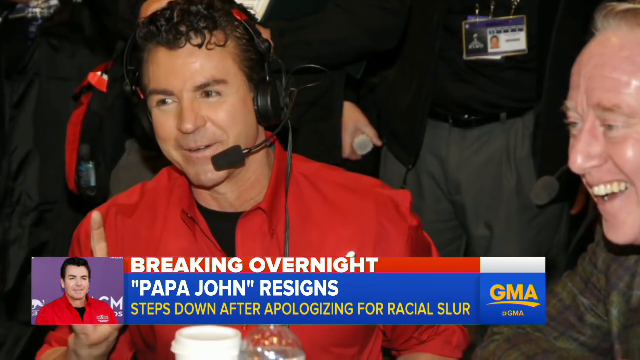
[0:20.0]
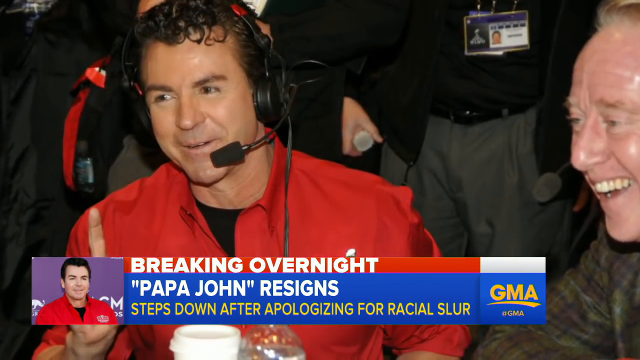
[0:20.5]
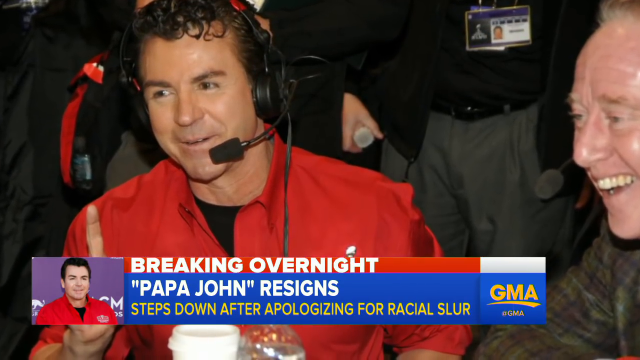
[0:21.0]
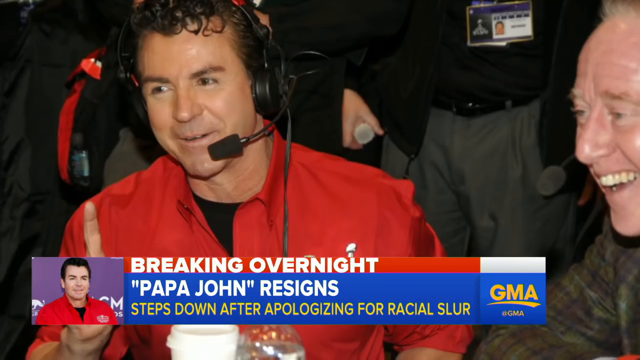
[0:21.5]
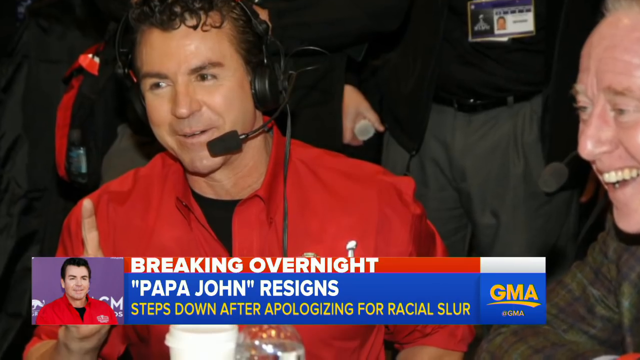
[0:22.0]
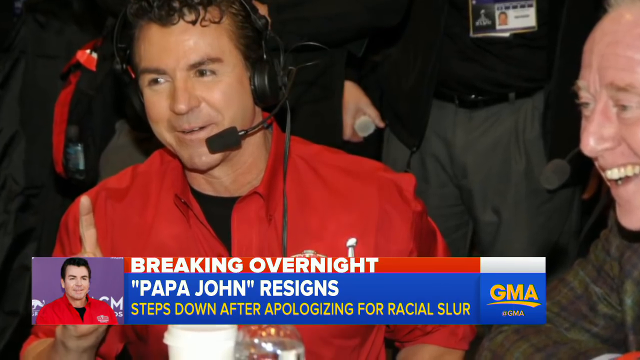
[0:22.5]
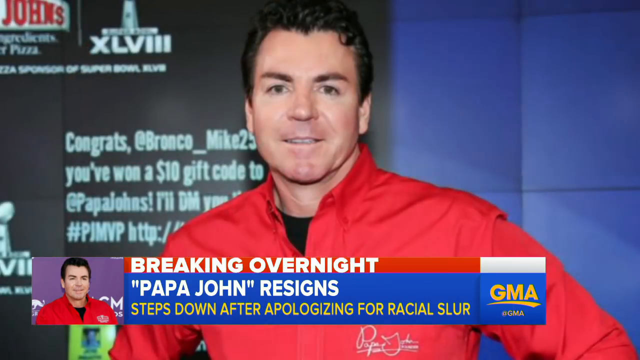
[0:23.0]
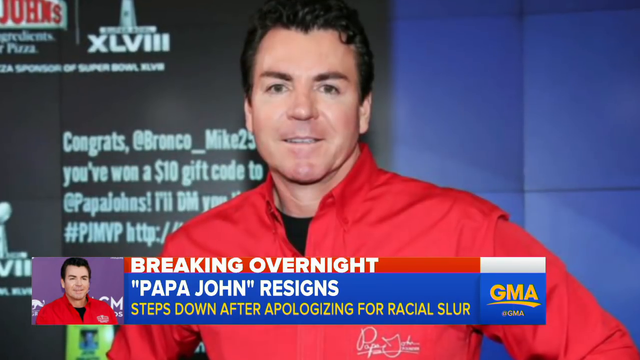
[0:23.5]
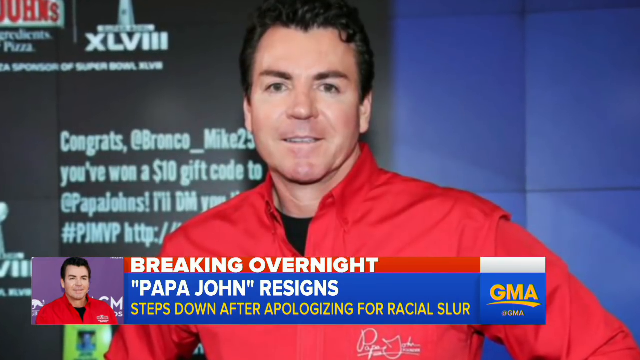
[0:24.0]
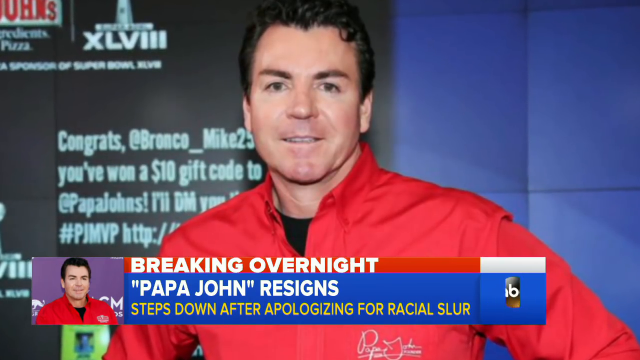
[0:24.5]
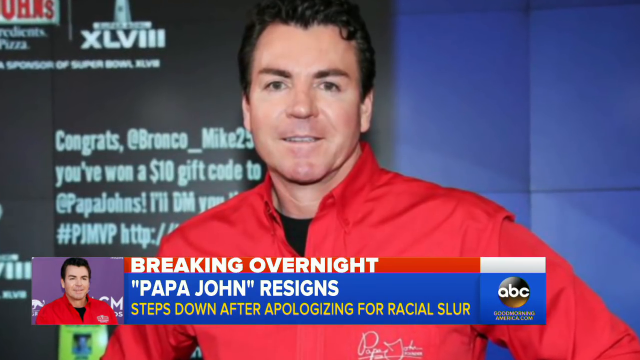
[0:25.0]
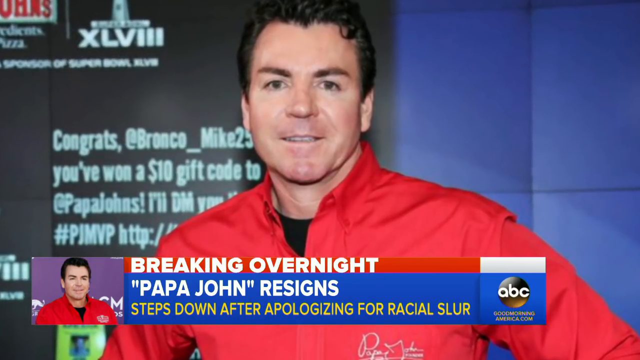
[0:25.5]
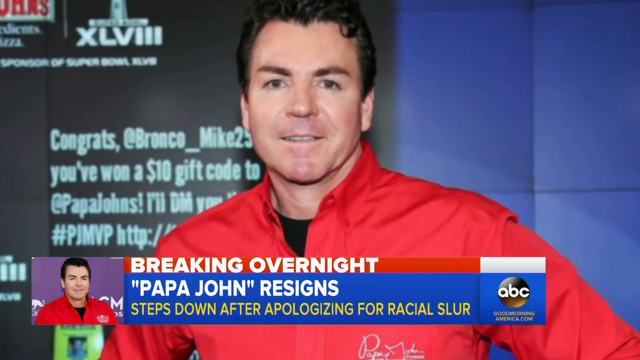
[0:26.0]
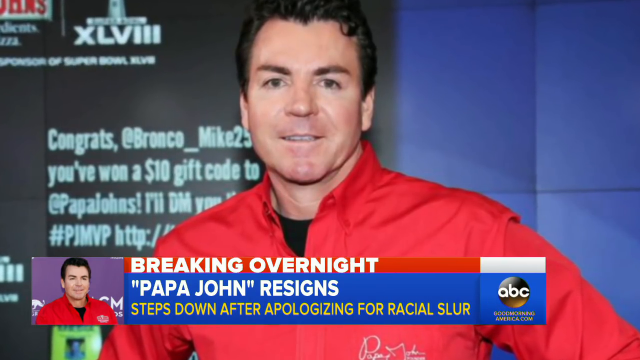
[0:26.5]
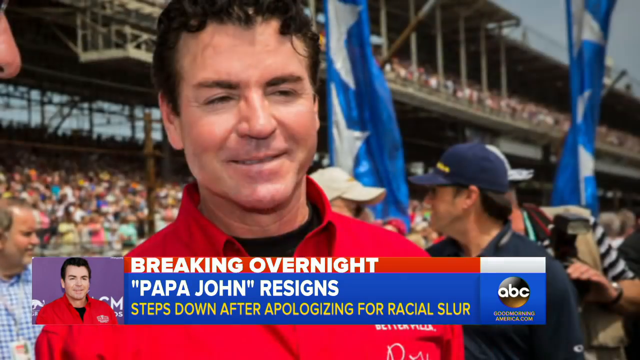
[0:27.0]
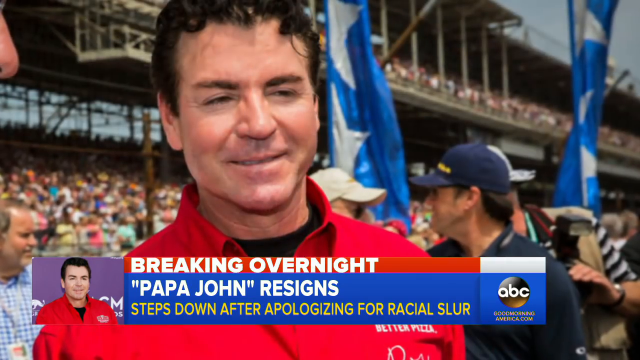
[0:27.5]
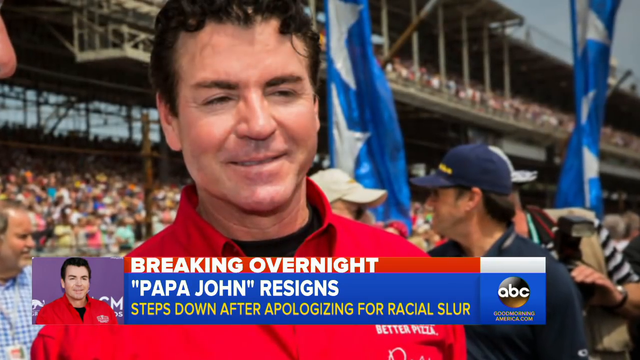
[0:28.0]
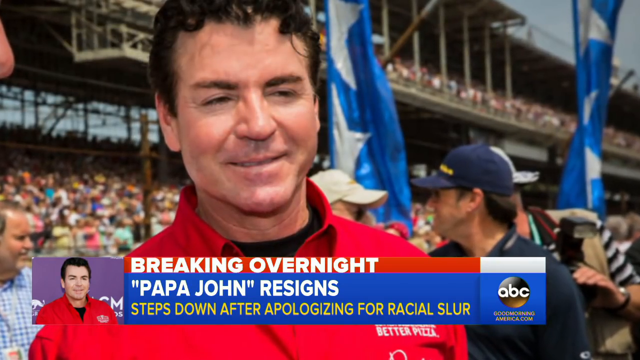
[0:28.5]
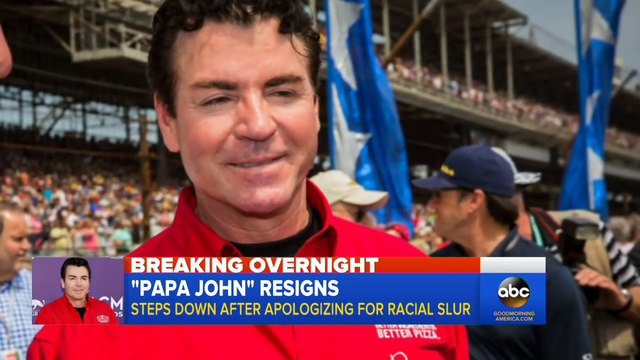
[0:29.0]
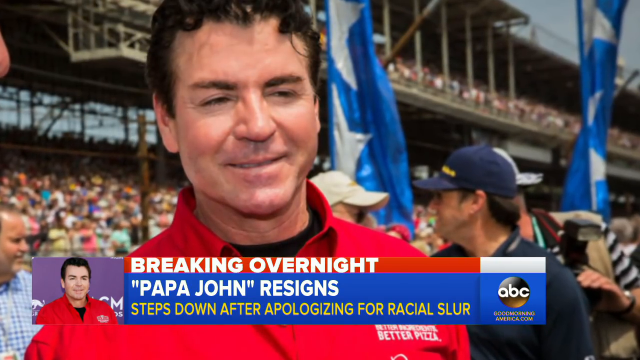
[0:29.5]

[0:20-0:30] The report on Papa John resigning and stepping down after apologizing for a racial slur continues. The man, a white man in a red suit, is seen out in public, smiling with people and wearing a mic. He seems to be into sport and looks active. He stands by a stadium with people around him at the back looking his way; he may be coming from a race or a sporting event, and the people look like fans who are happy to be there to support him.